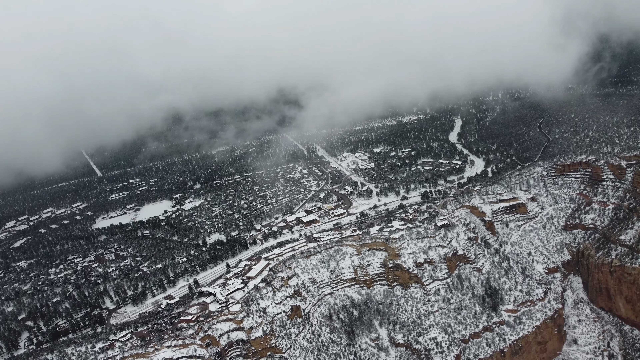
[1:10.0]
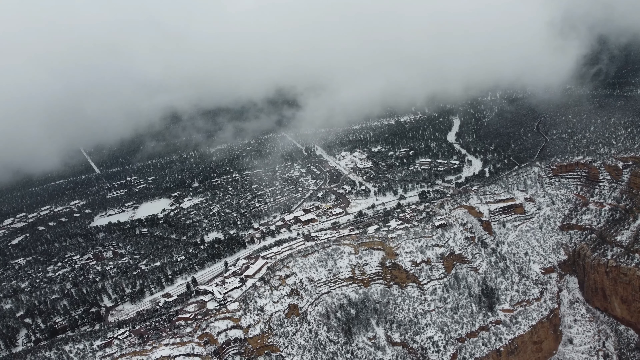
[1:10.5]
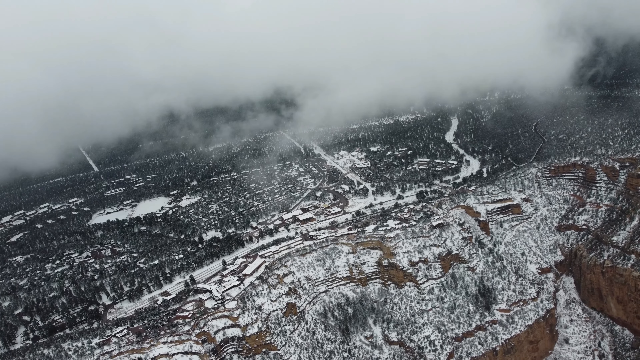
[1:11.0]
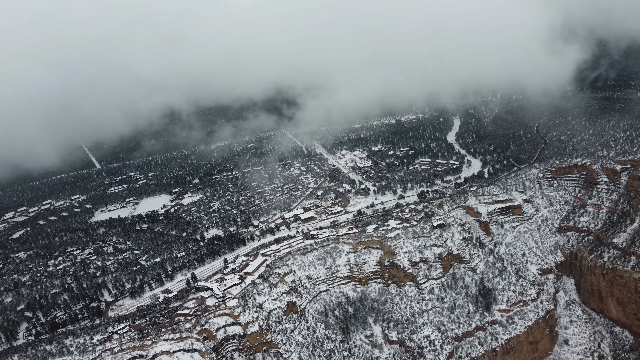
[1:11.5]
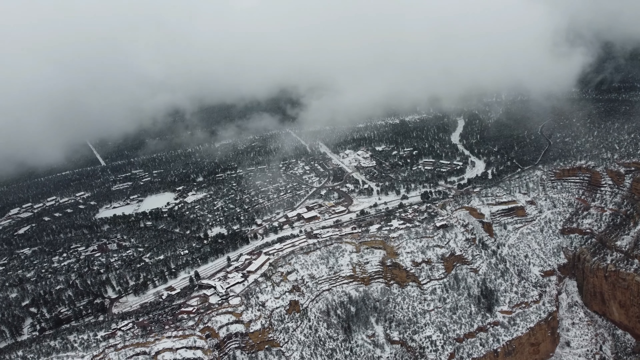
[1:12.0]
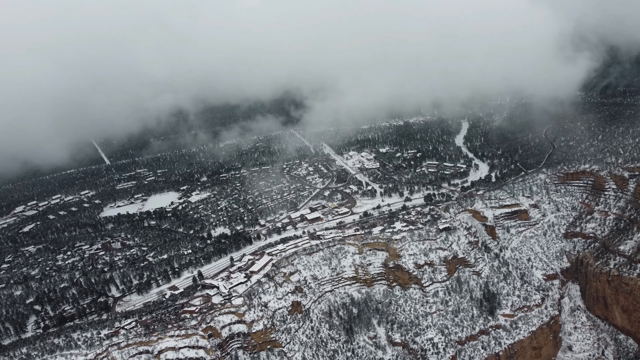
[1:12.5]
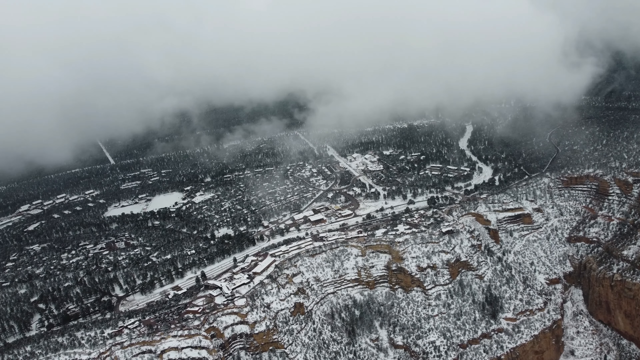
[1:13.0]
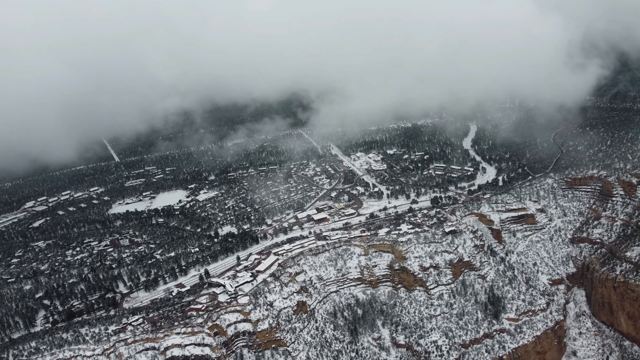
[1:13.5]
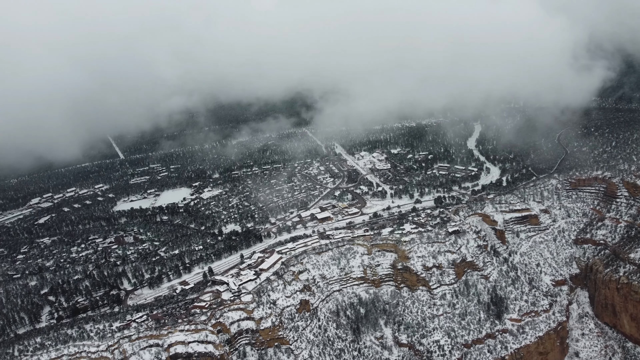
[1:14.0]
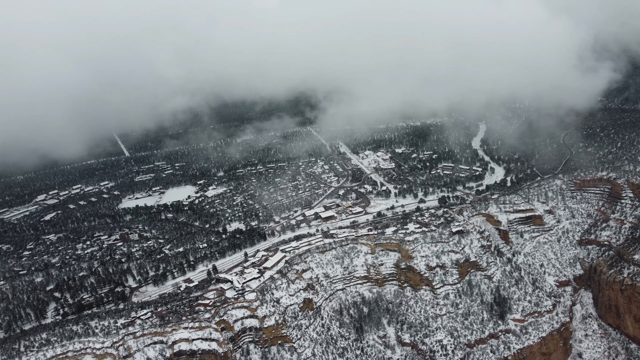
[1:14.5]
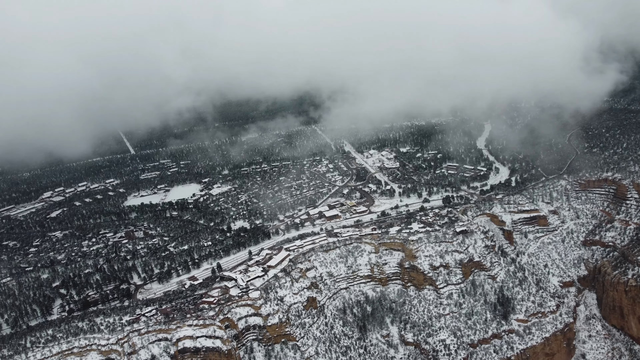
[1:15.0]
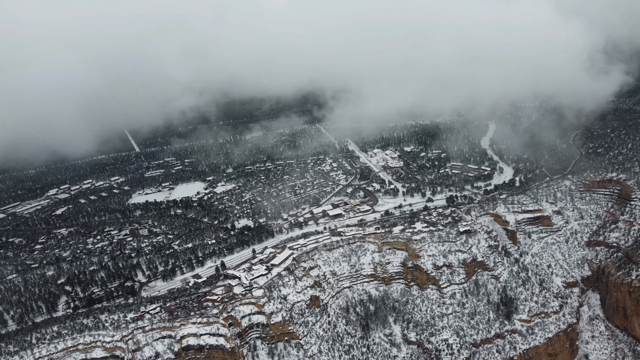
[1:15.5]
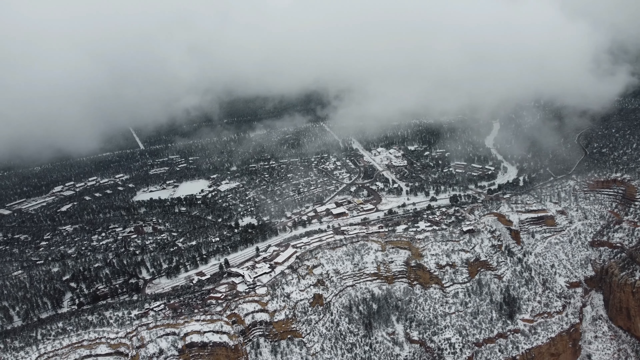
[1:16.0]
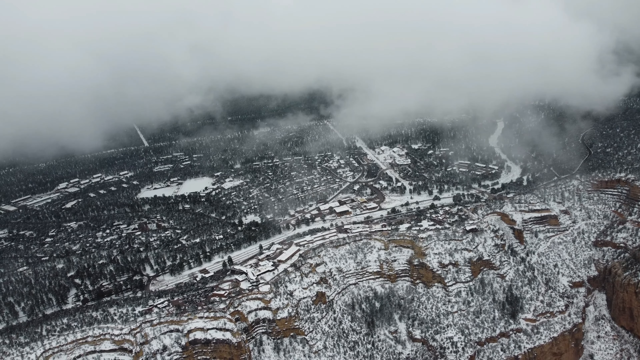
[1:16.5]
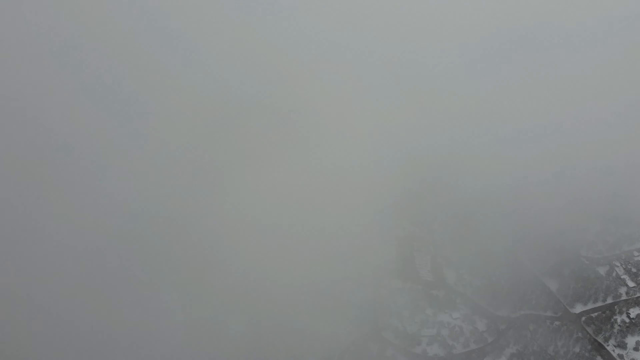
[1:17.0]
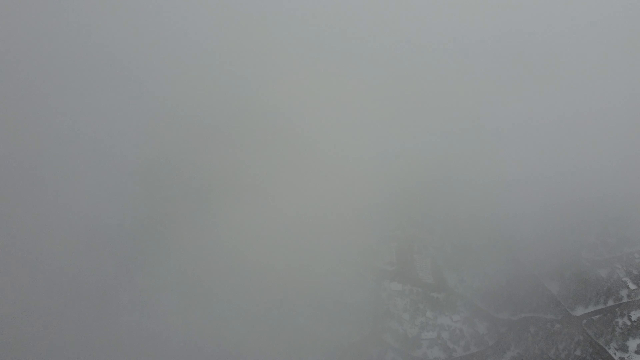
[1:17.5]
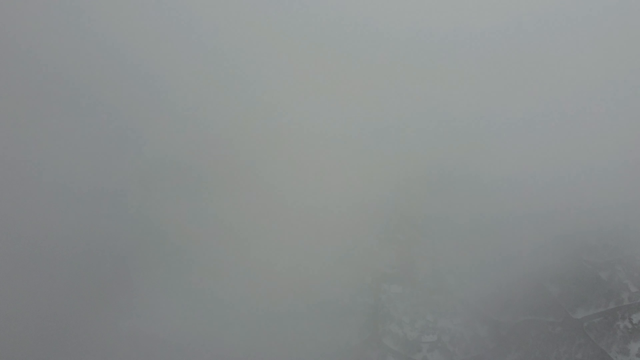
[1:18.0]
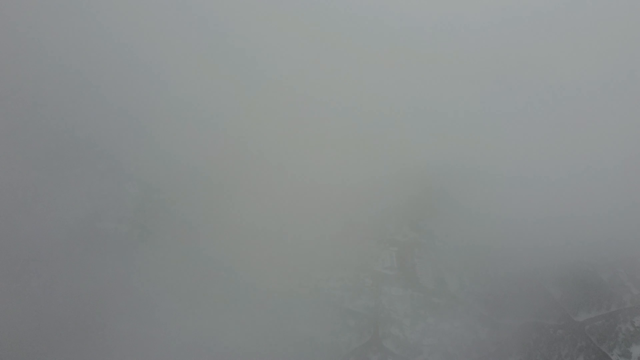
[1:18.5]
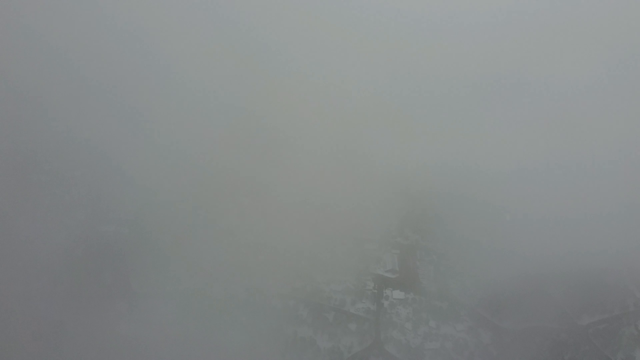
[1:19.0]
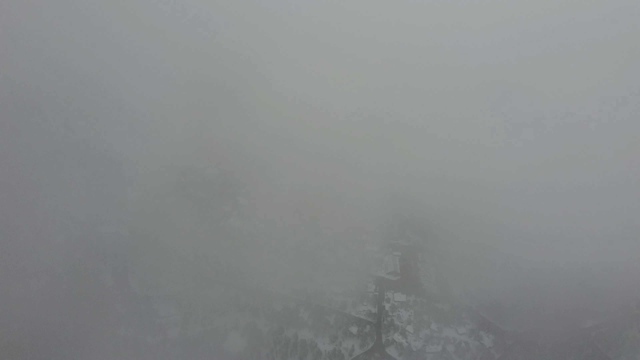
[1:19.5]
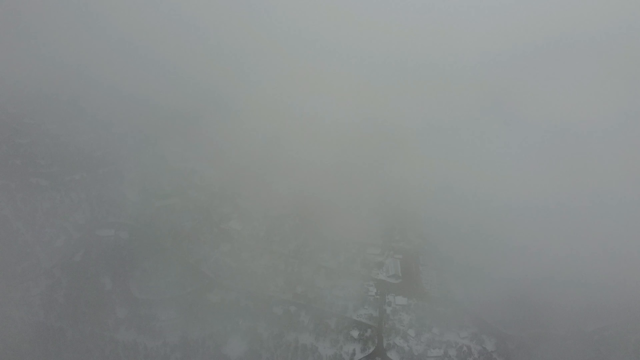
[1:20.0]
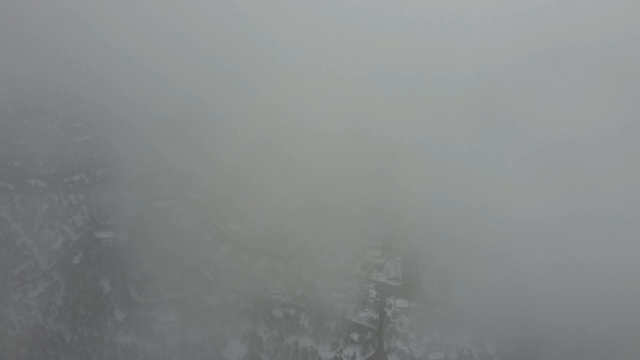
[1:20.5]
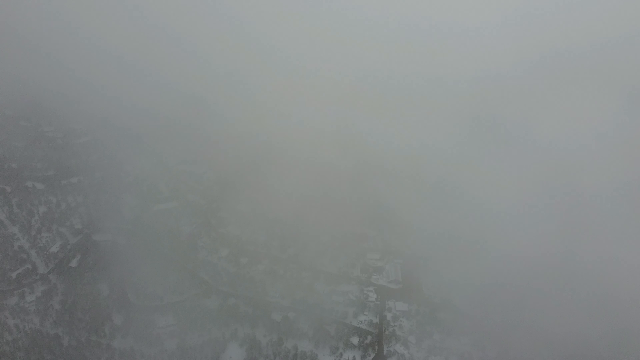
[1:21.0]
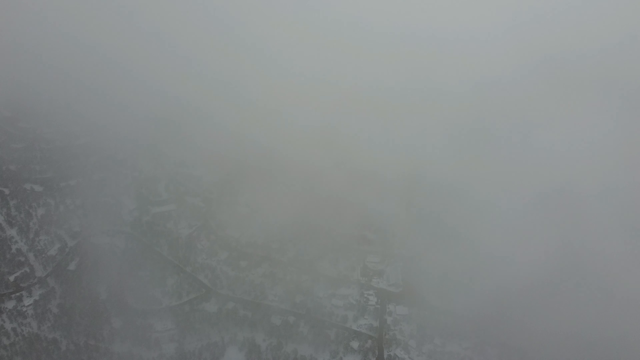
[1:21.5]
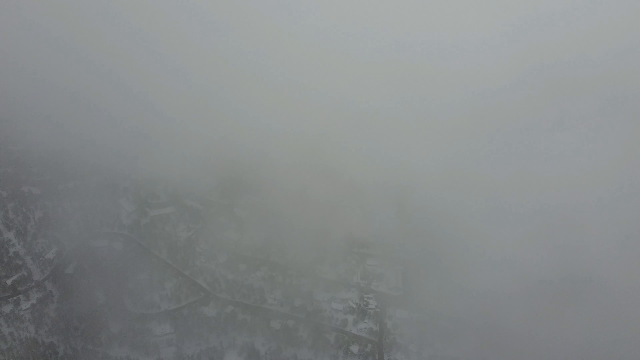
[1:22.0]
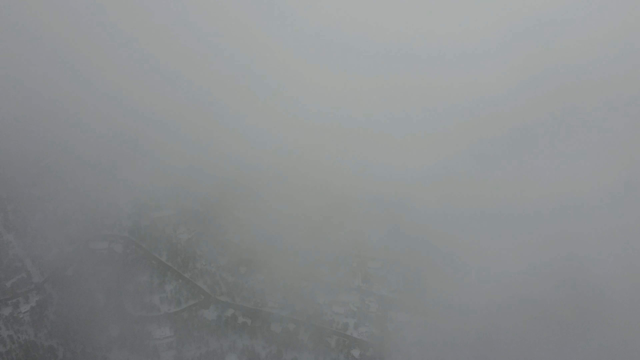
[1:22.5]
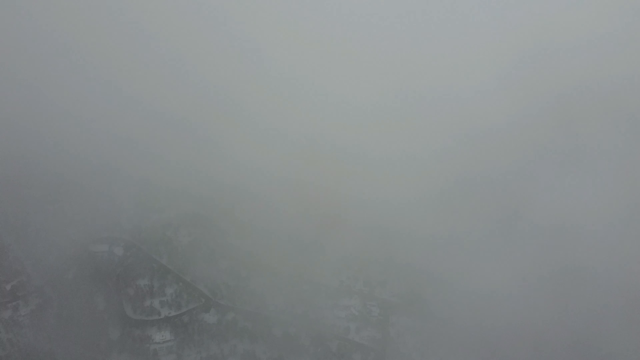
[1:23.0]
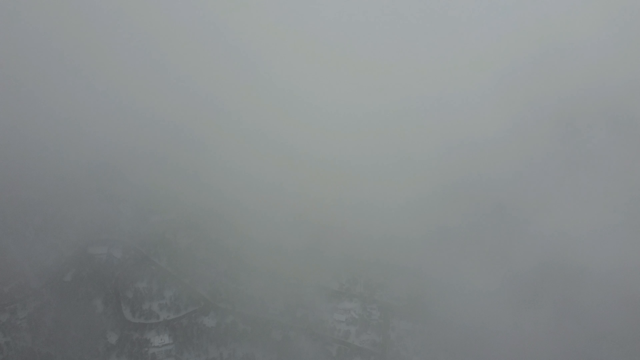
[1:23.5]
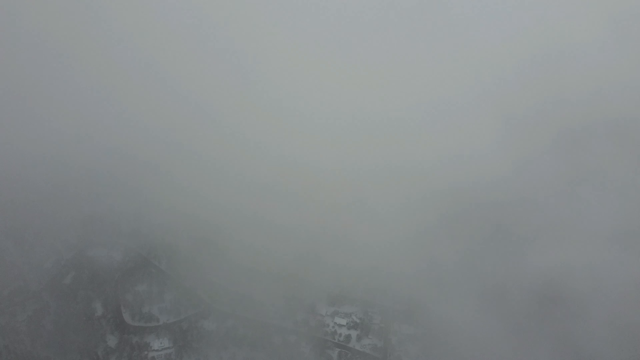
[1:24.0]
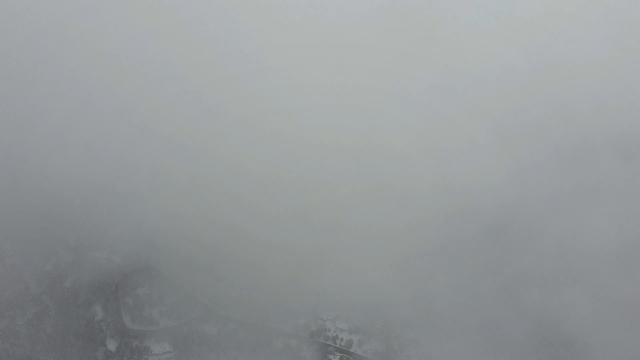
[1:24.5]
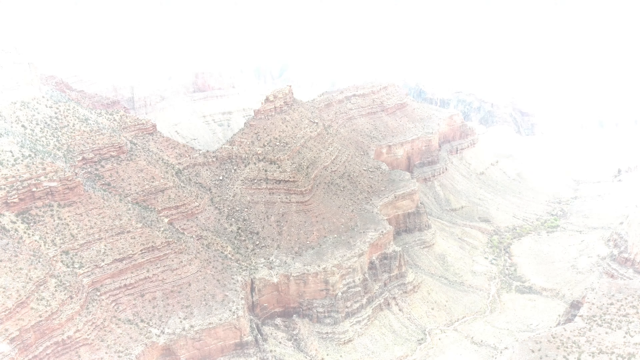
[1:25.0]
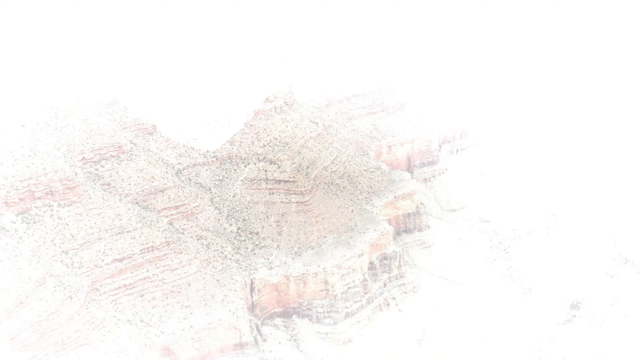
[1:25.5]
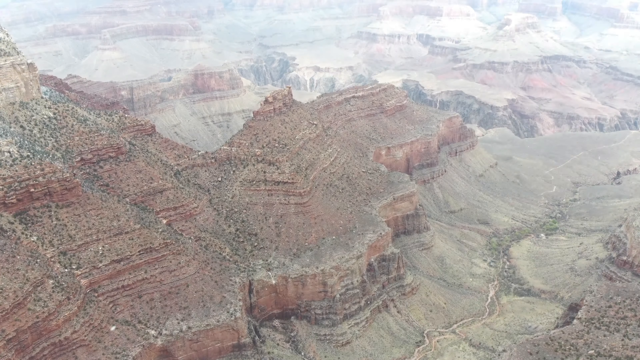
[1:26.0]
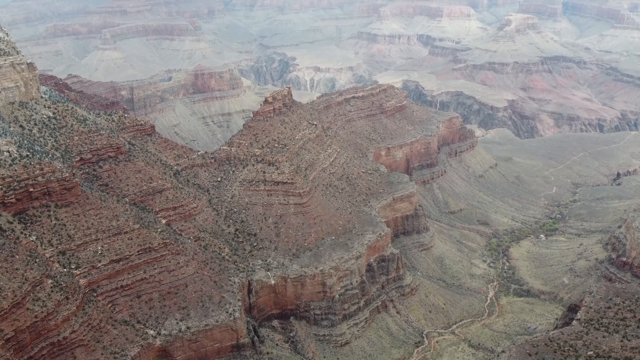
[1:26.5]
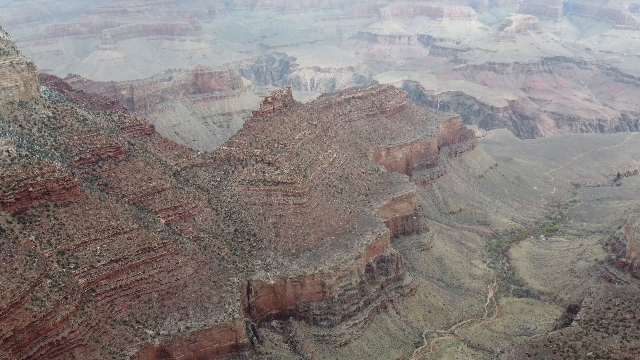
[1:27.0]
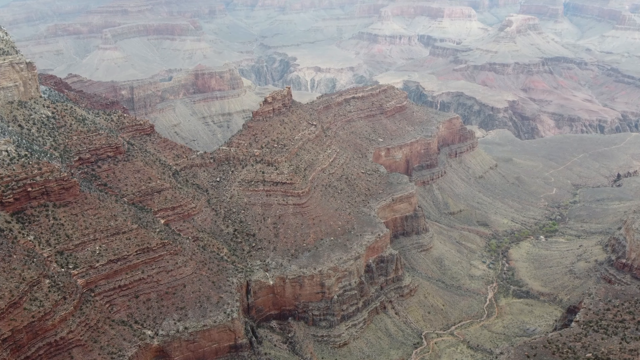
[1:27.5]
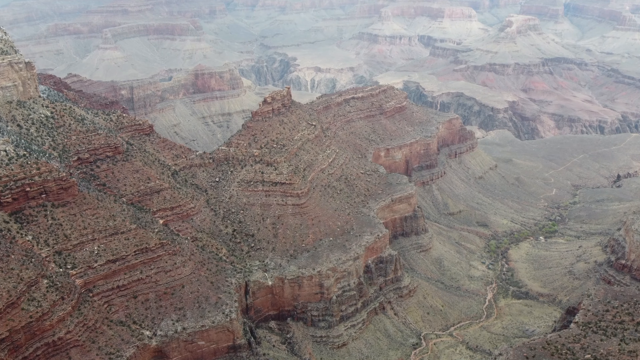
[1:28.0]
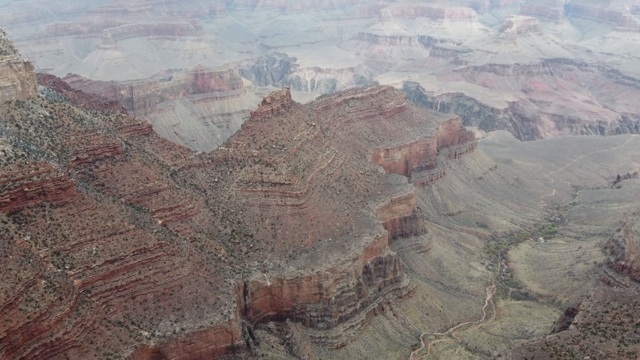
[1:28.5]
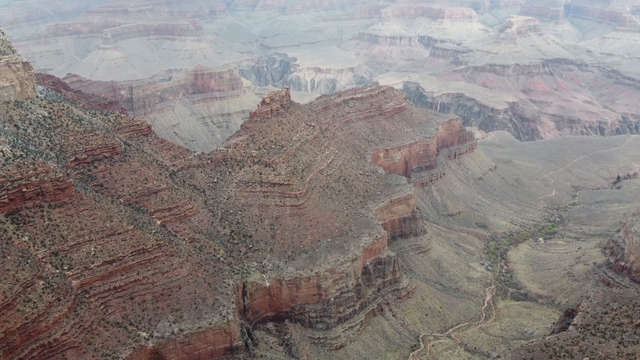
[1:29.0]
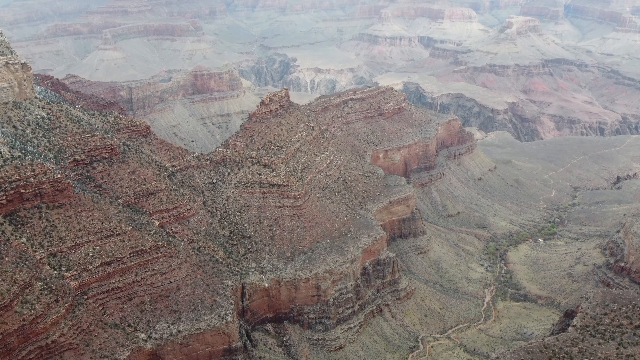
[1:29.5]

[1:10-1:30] What looks like a drone or satellite view shows an area or mountaintop filled with forest, with multiple trees and very steep slopes. The shot turns to only gray, and an image pops up in the middle of the screen. The view from above continues as cloud blurs it. A flash of light leads into footage of the mountains or the Grand Canyon: a mountain starts on the left side and continues to the right, and there is what looks like a ditch or the end of the space. Bedrock is on top of the mountain with a channel just below. White particles fly to the left side of the screen.